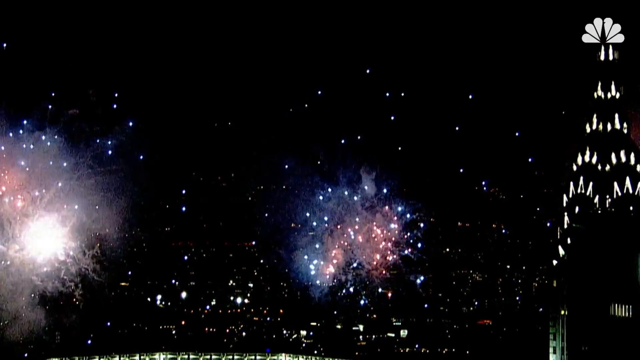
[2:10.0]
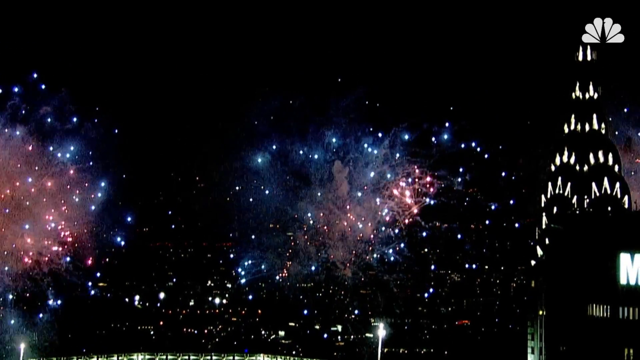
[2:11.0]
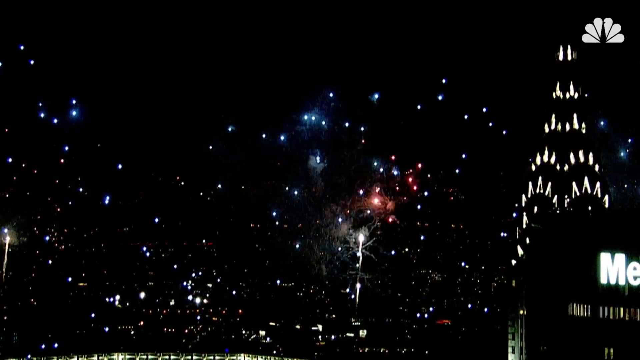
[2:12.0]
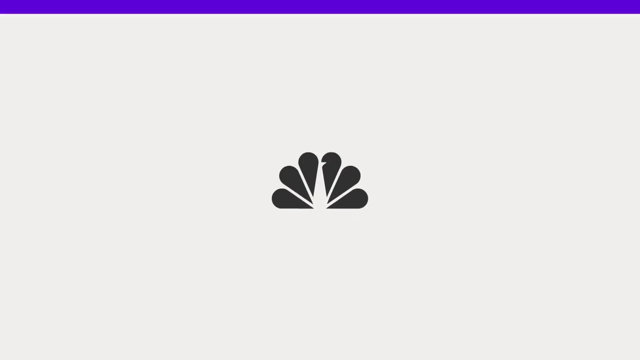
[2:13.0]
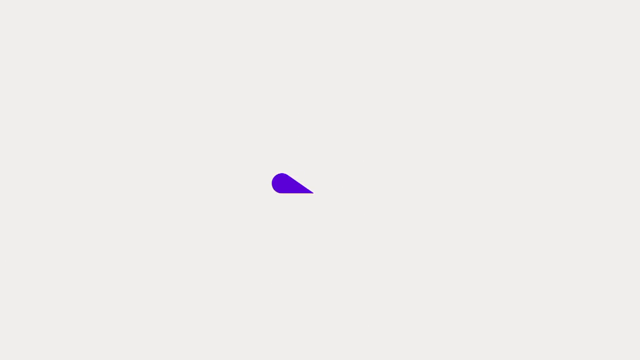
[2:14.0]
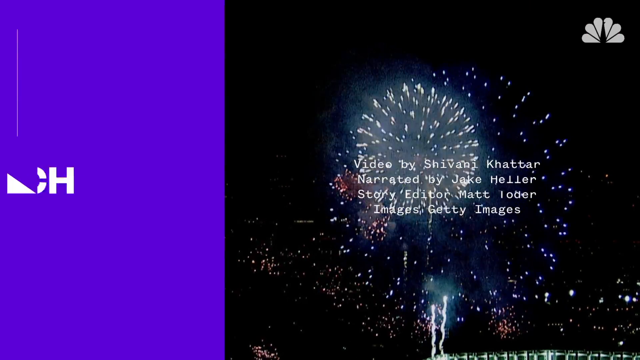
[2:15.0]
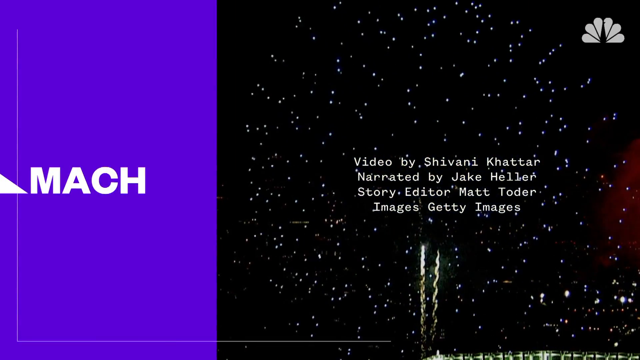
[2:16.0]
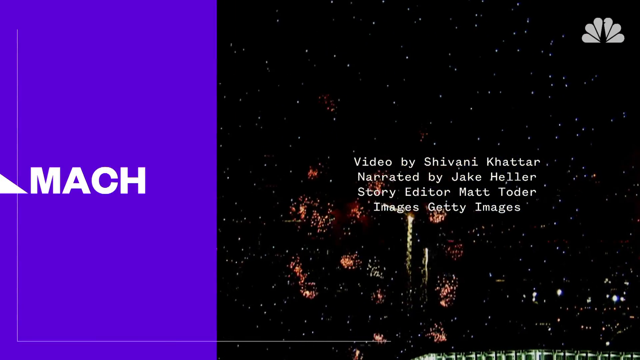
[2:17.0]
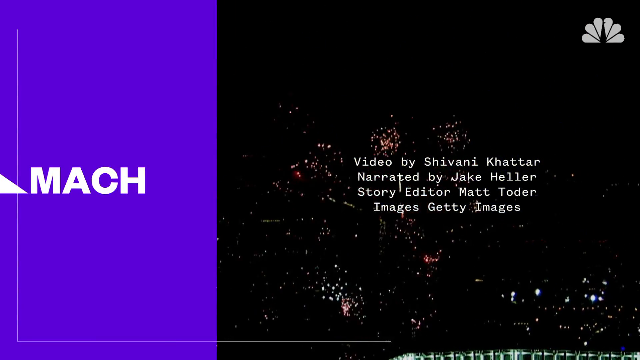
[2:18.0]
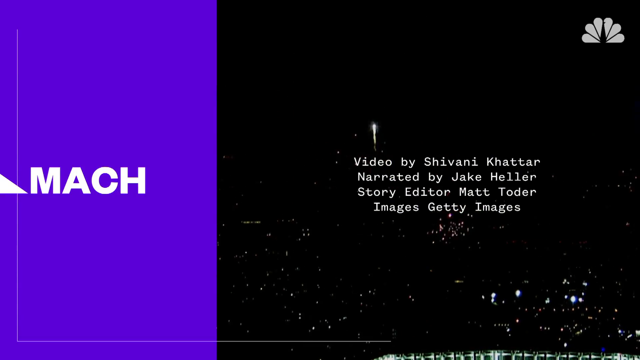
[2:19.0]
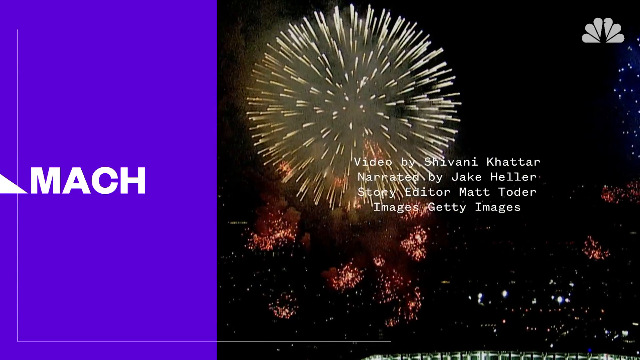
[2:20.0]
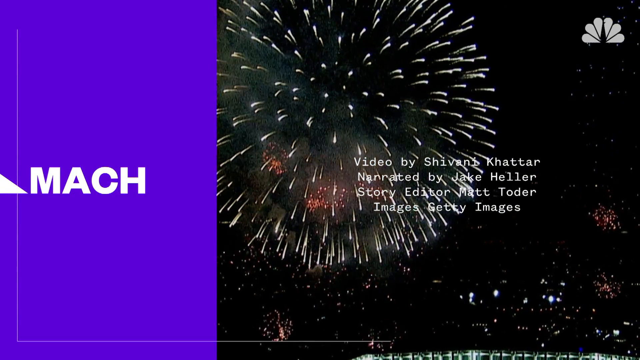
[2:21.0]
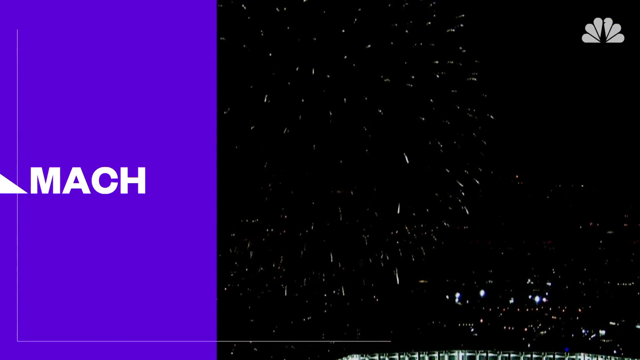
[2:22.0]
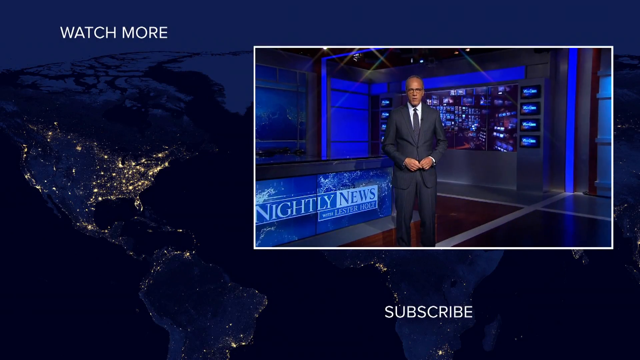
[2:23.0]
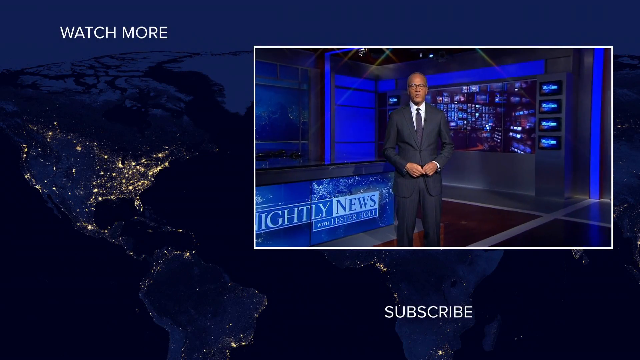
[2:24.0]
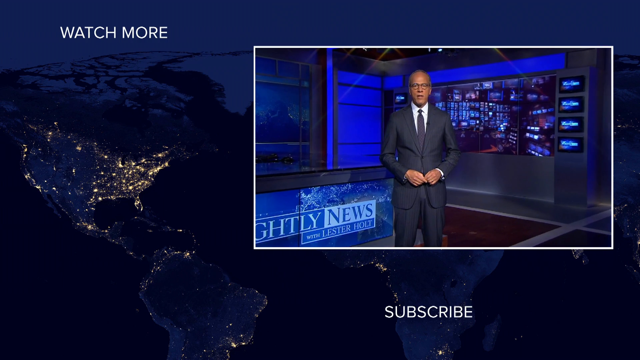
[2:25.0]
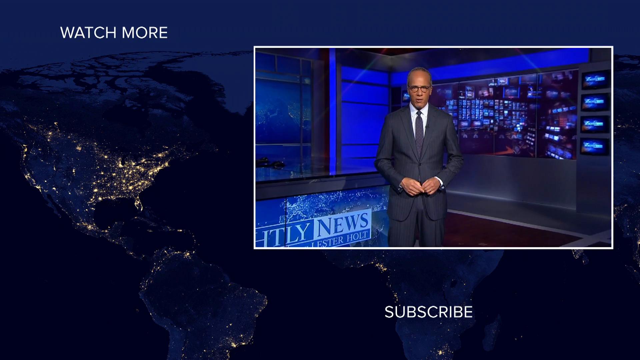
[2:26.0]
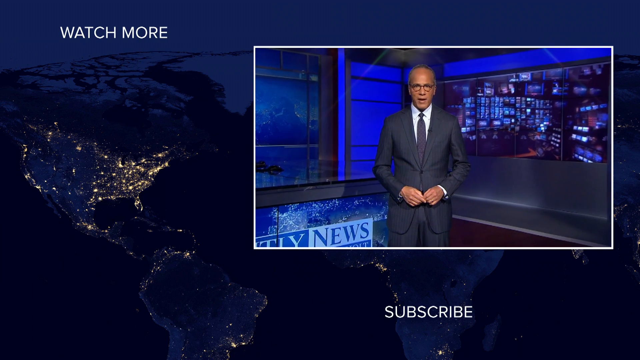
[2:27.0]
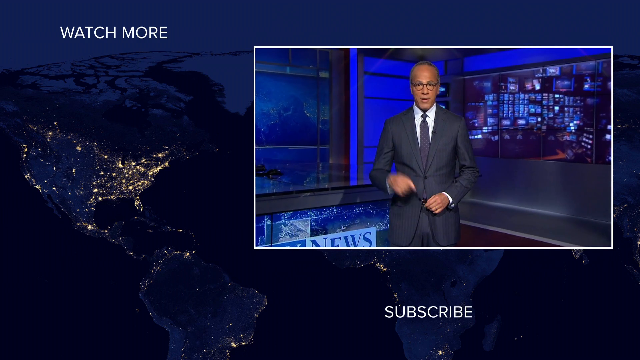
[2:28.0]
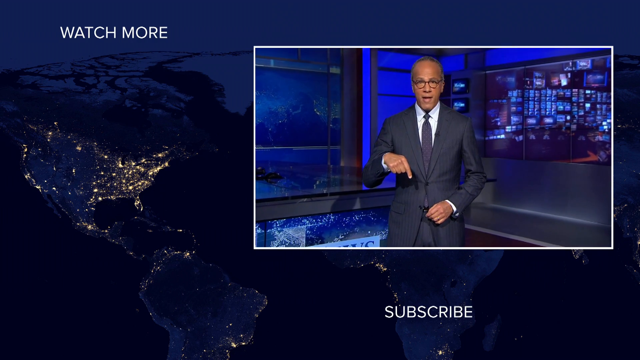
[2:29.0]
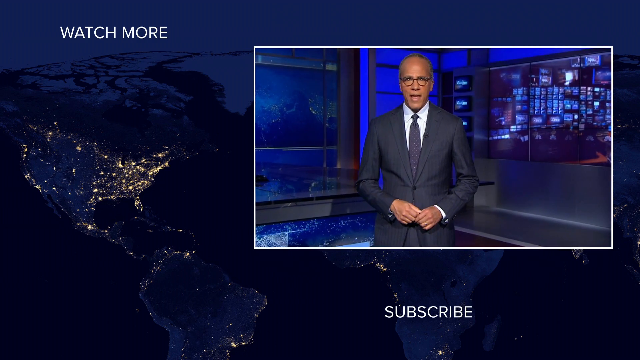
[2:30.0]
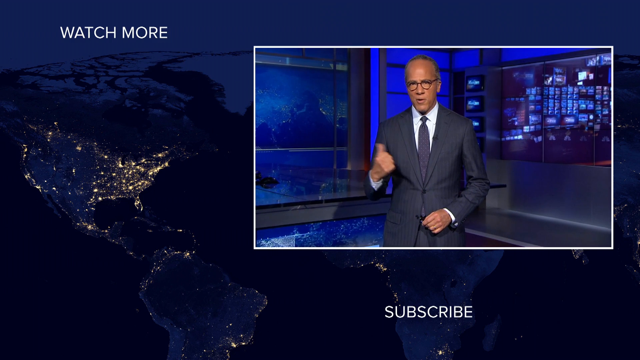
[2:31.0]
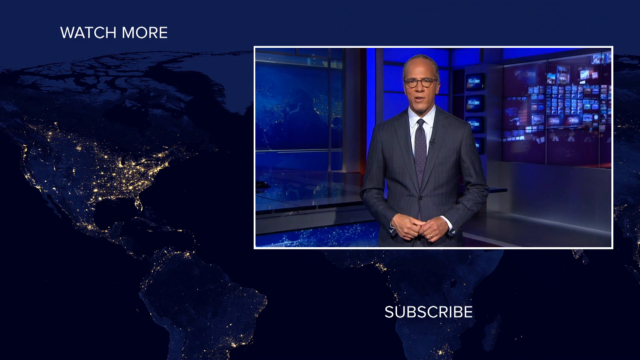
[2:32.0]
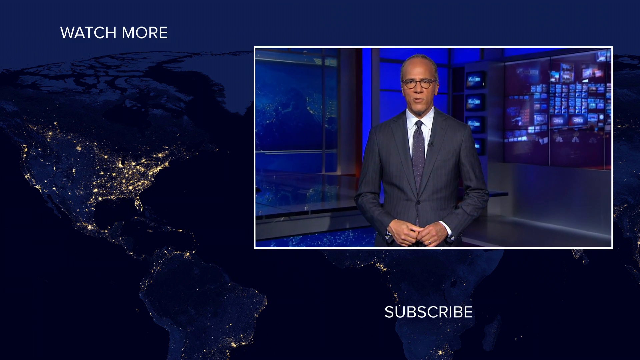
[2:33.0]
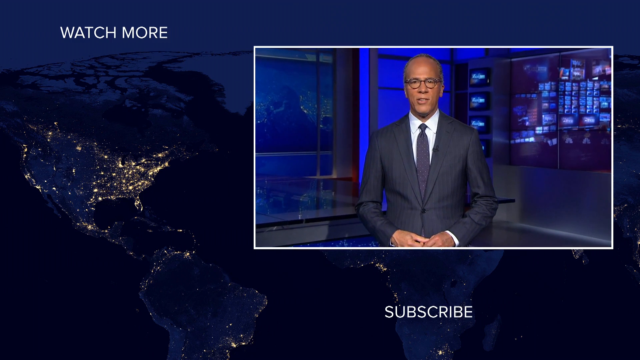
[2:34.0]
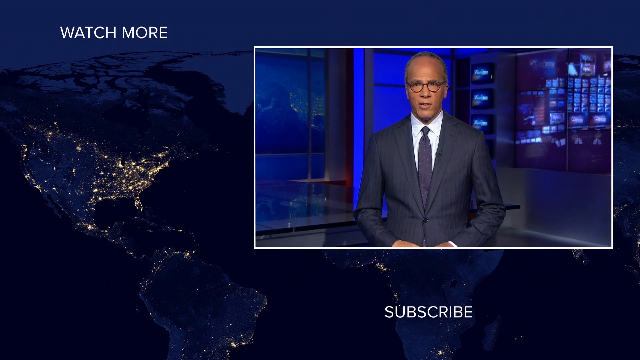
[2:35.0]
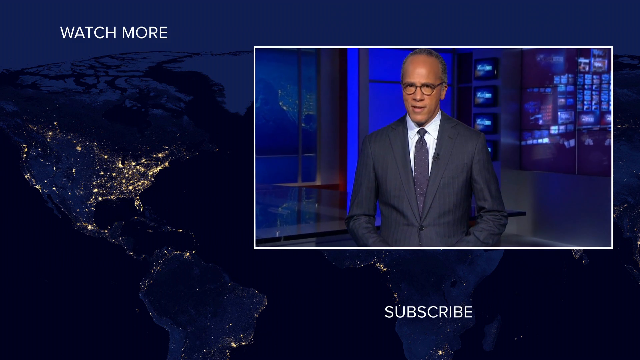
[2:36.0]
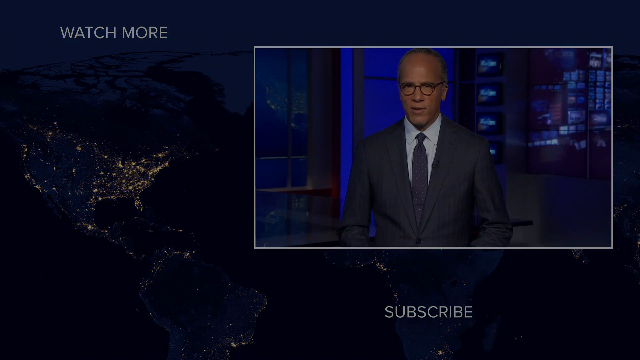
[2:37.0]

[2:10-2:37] Fireworks are set off in red, white, blue and yellow, illuminating the sky. They appear to be taking place next to a tower, one of which is visible. Then the logo of the video's producers appears, followed by credits. A man stands in a television studio wearing a suit and appears to be reading the news. Next to him is a skyline at night, illuminated only by lights. The words "watch more" are written in the top left of the screen.